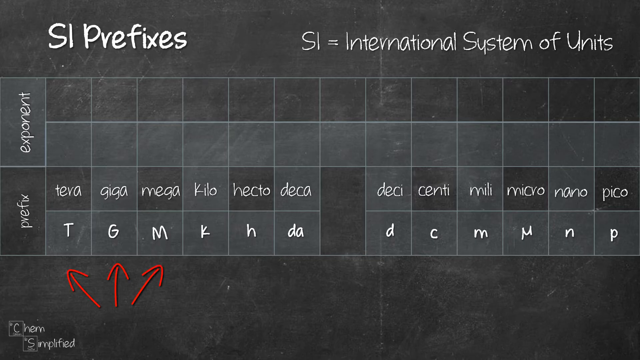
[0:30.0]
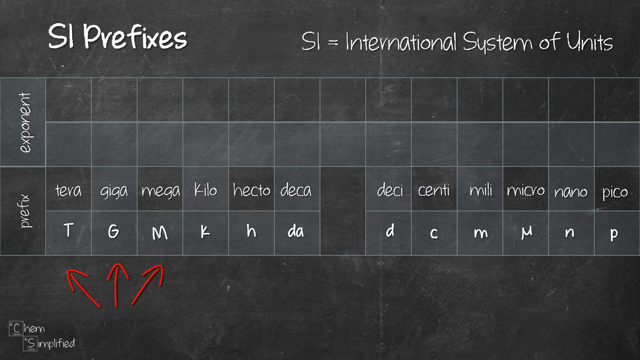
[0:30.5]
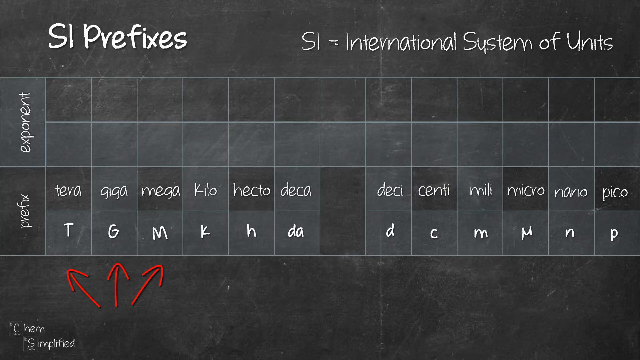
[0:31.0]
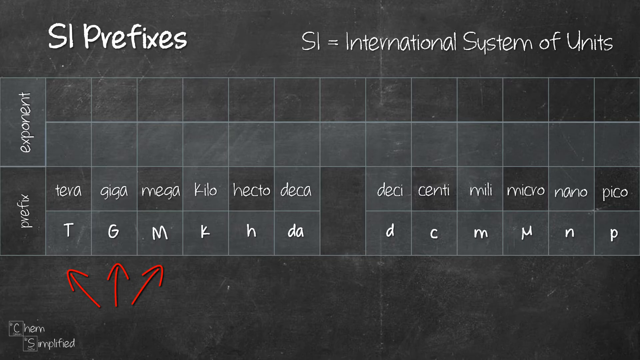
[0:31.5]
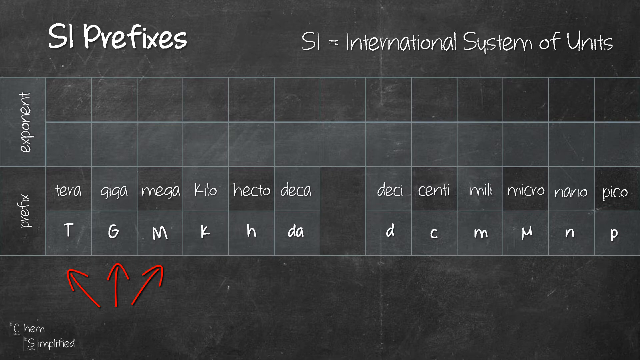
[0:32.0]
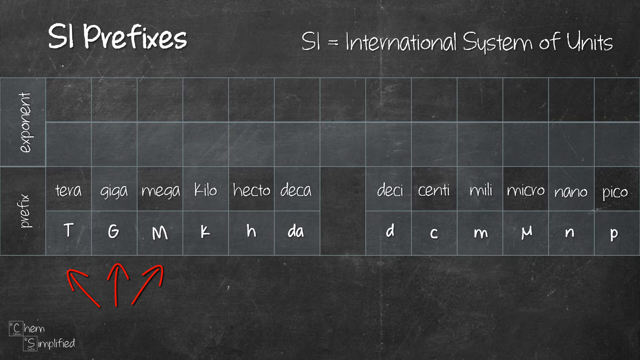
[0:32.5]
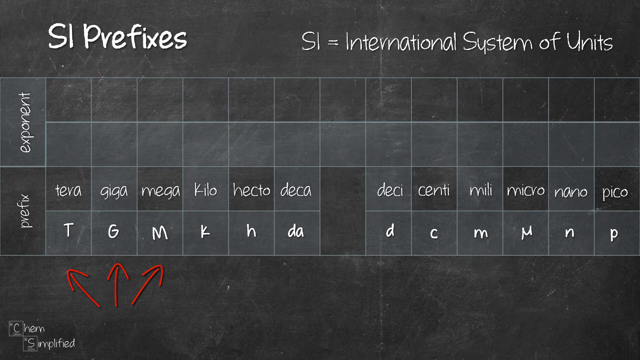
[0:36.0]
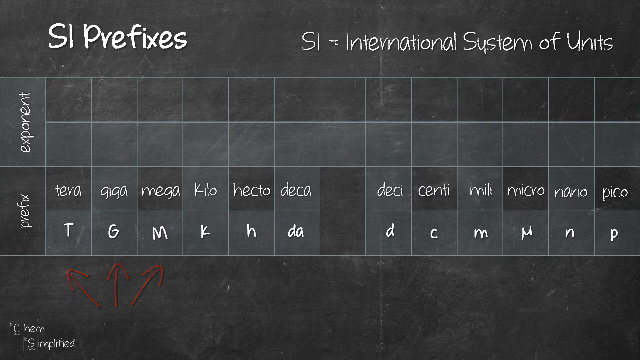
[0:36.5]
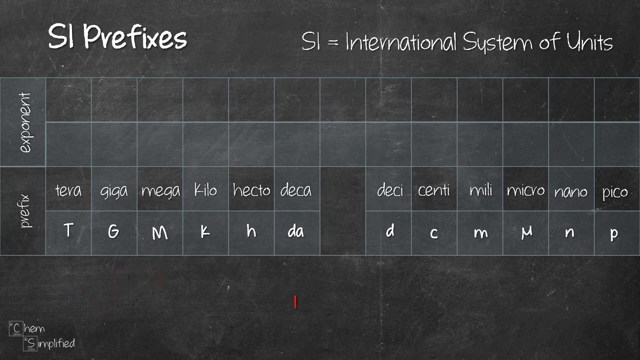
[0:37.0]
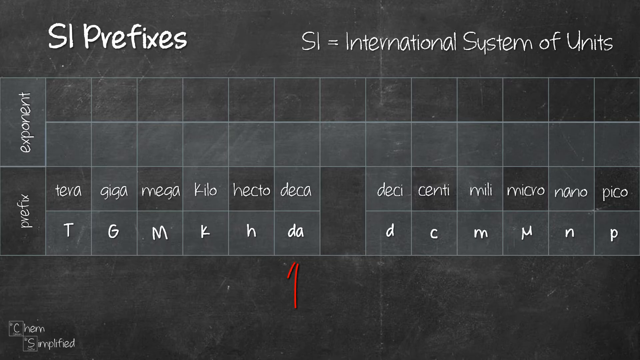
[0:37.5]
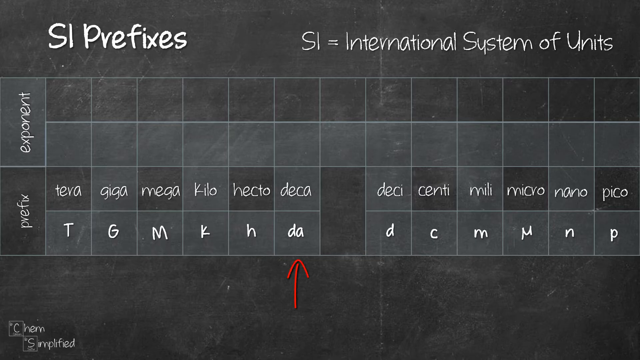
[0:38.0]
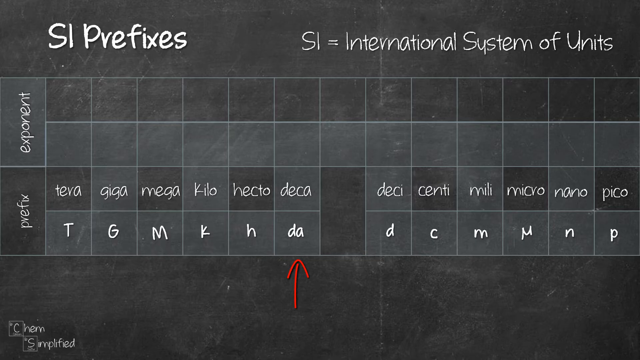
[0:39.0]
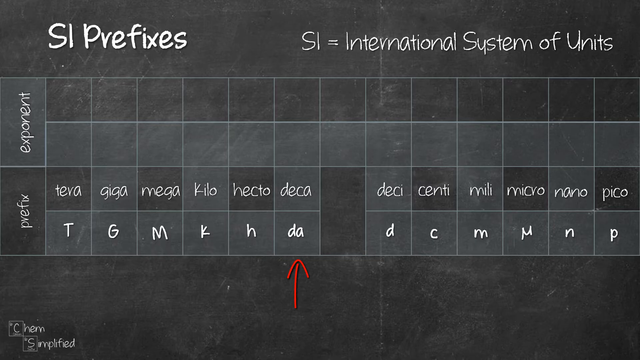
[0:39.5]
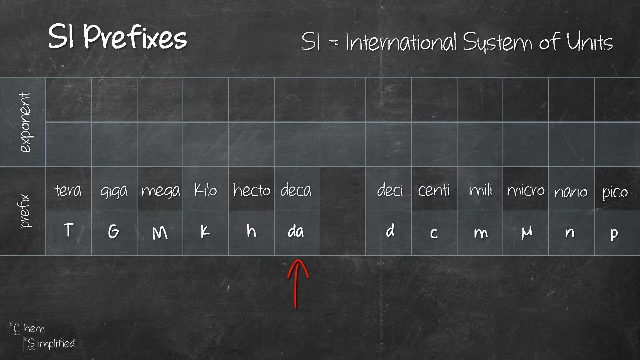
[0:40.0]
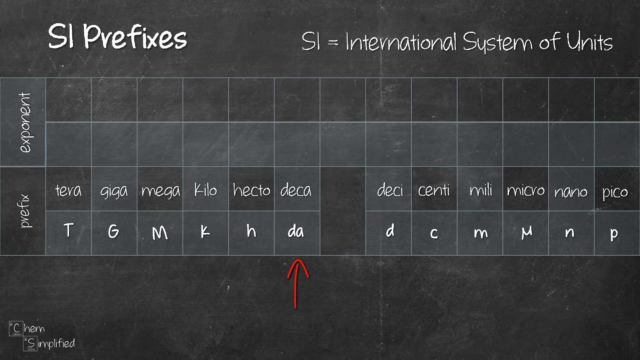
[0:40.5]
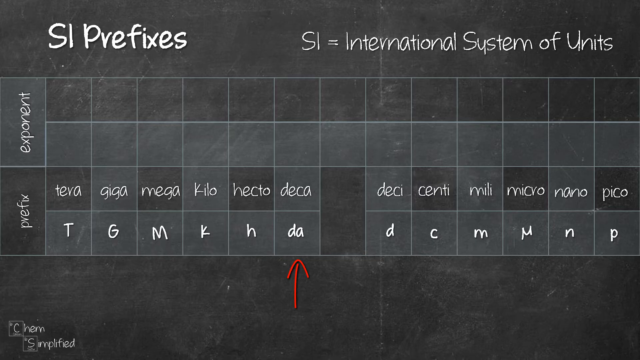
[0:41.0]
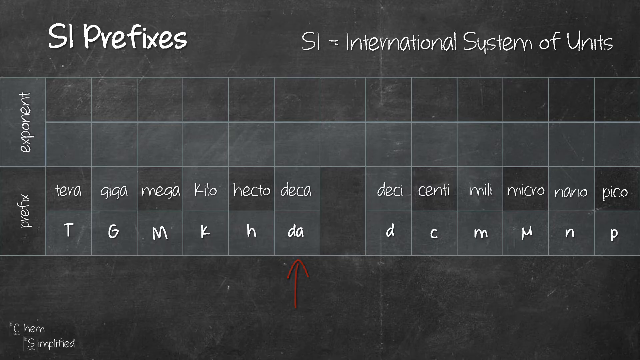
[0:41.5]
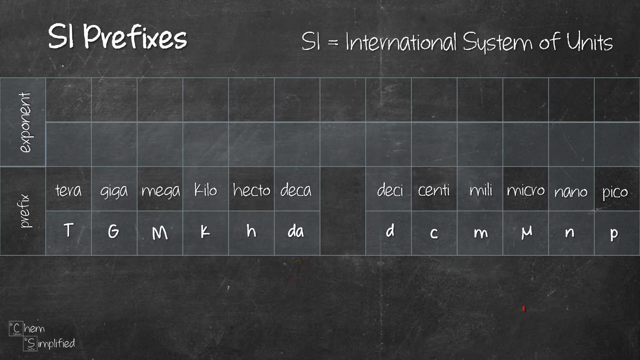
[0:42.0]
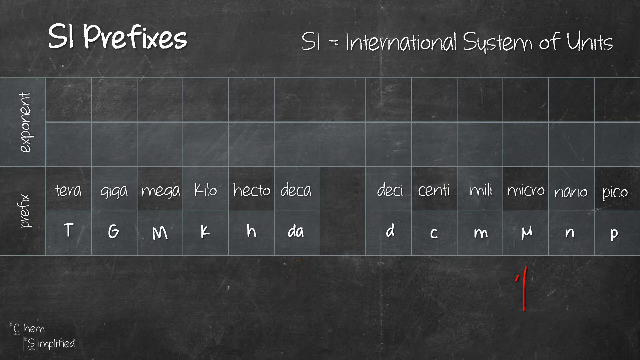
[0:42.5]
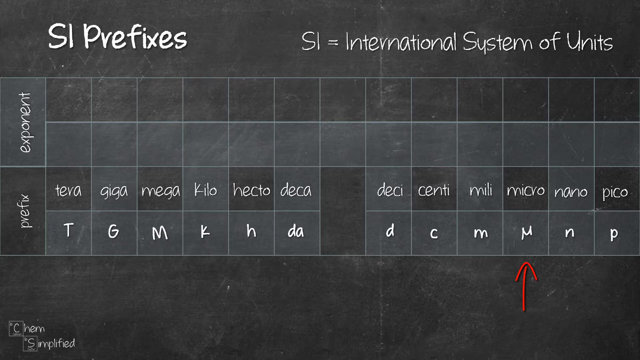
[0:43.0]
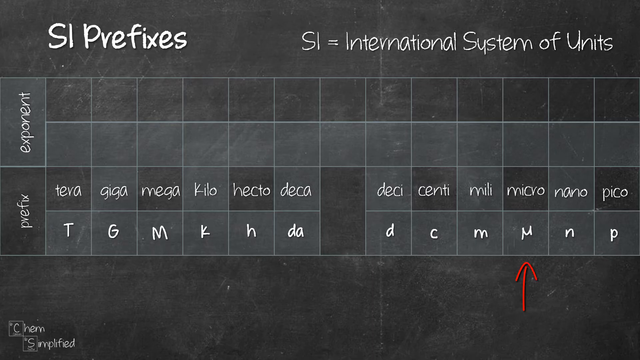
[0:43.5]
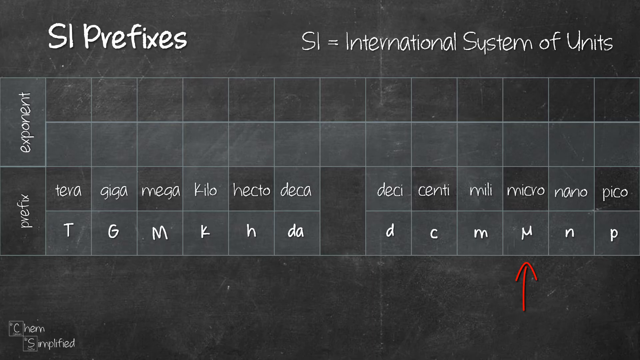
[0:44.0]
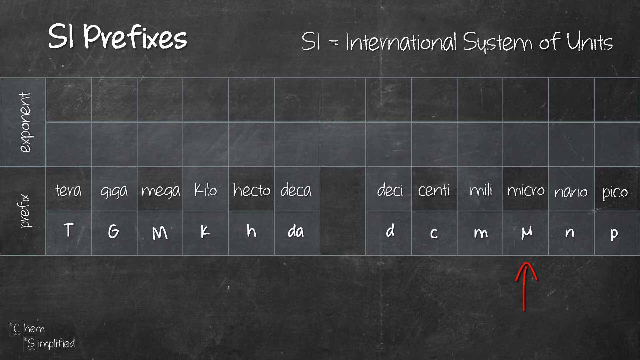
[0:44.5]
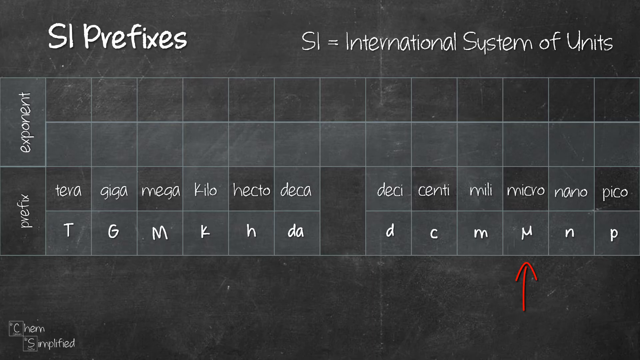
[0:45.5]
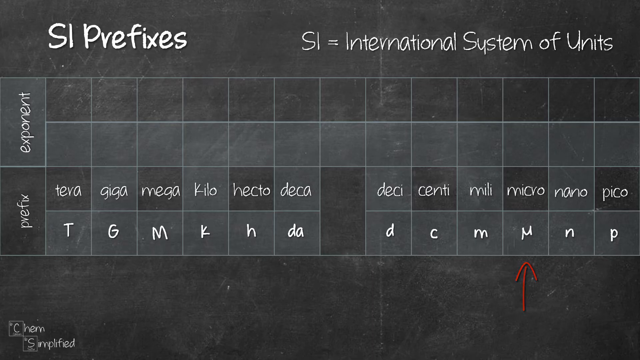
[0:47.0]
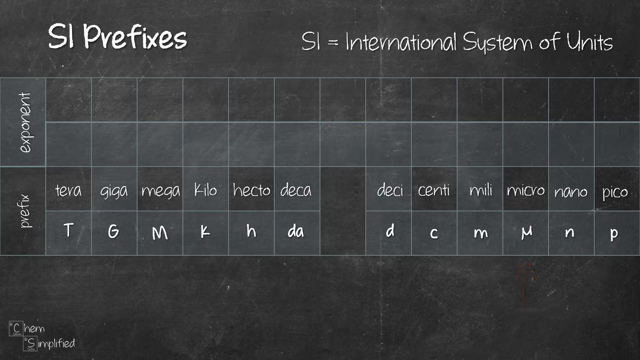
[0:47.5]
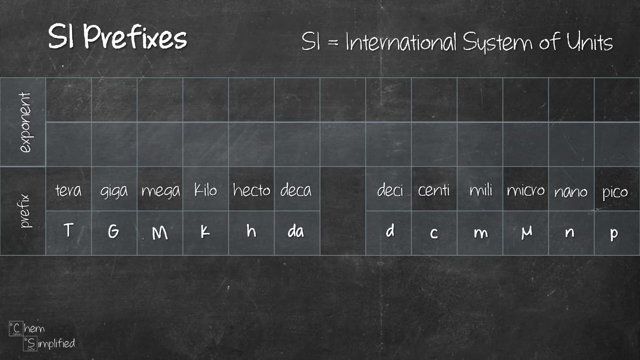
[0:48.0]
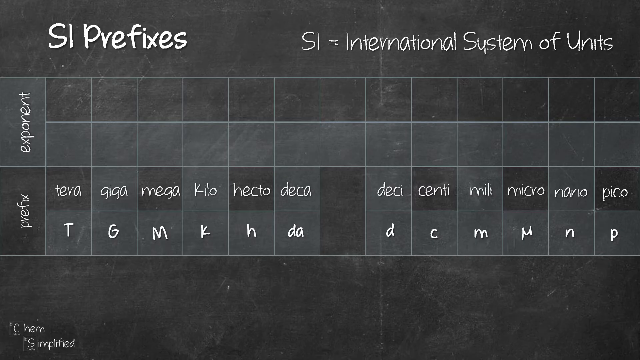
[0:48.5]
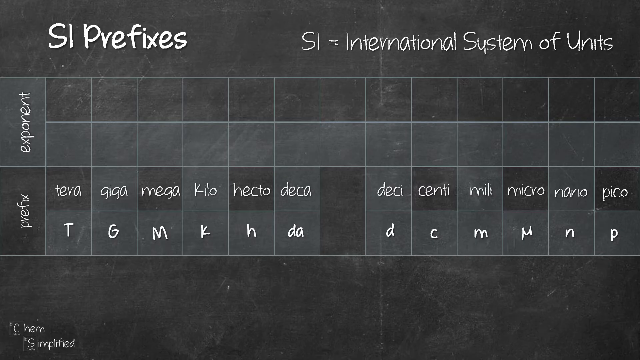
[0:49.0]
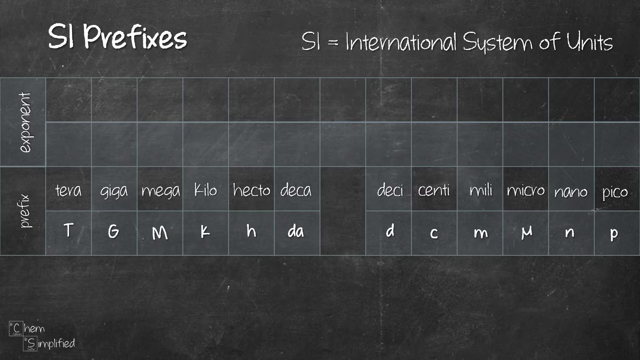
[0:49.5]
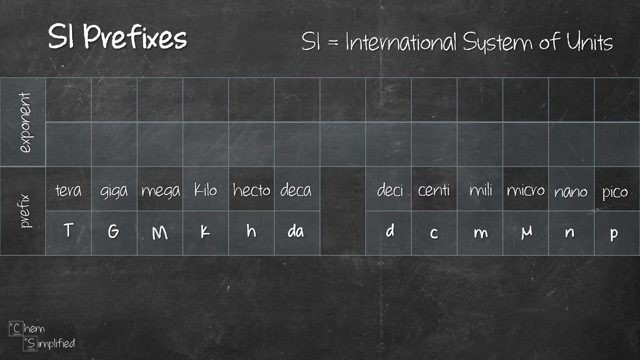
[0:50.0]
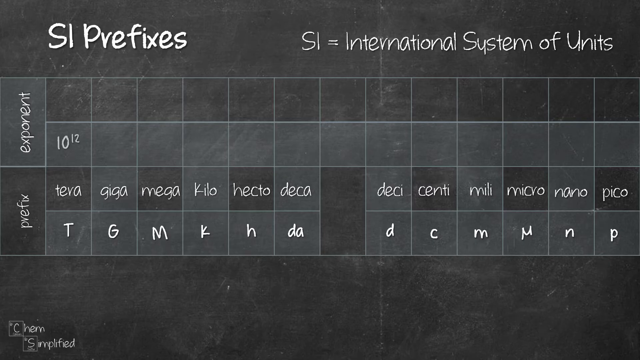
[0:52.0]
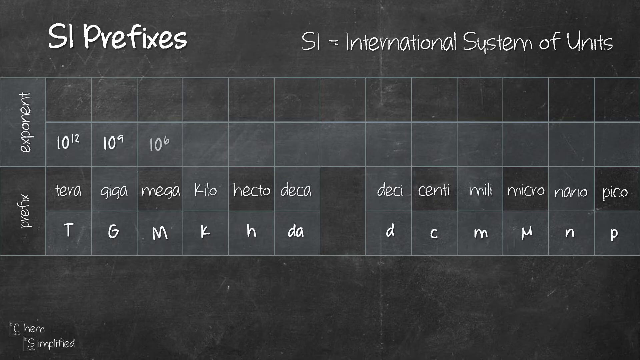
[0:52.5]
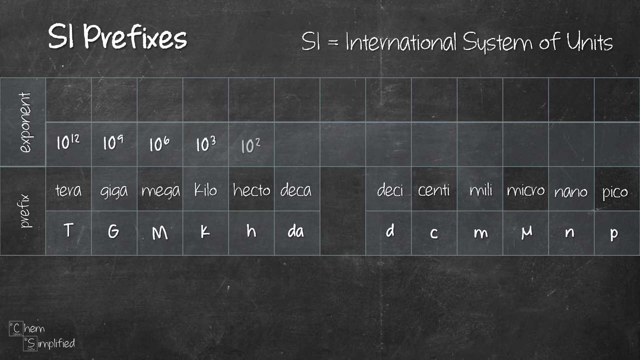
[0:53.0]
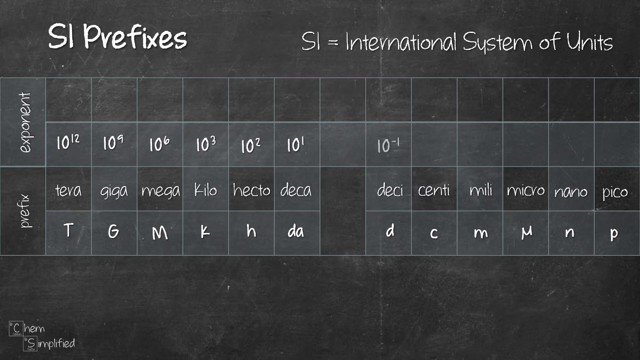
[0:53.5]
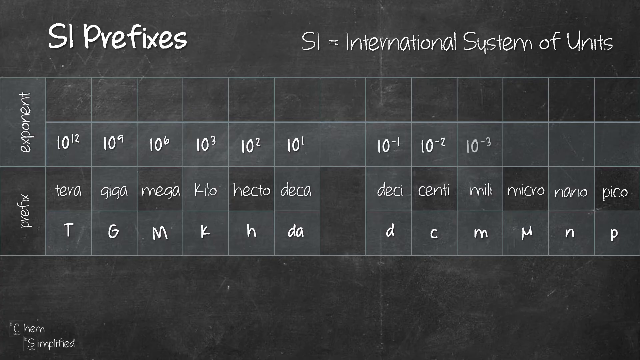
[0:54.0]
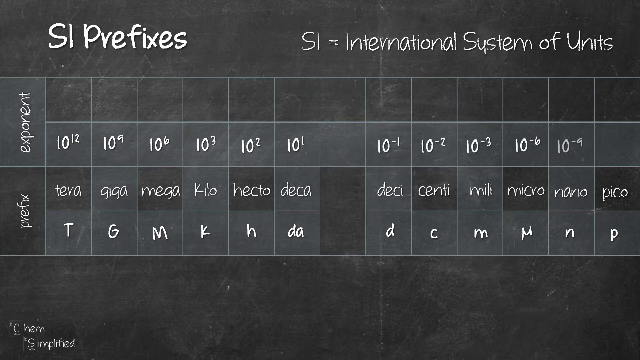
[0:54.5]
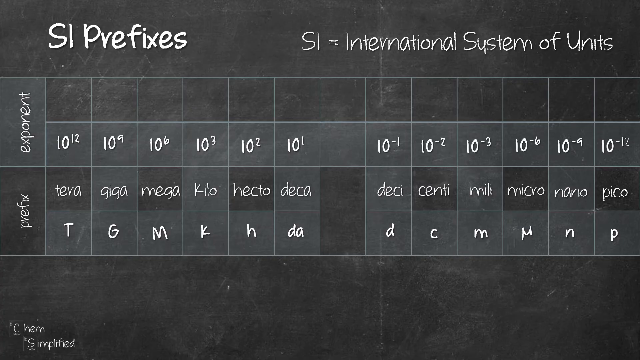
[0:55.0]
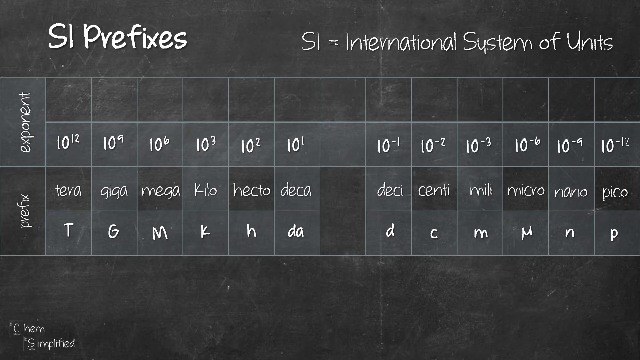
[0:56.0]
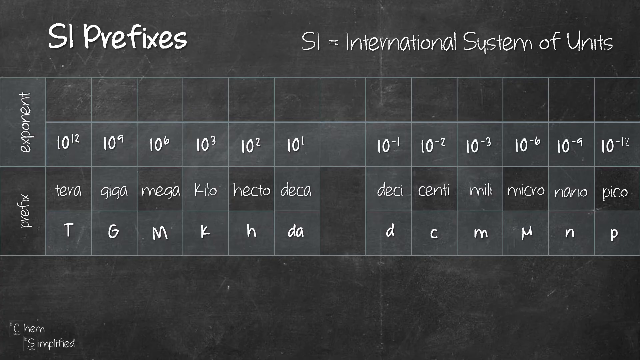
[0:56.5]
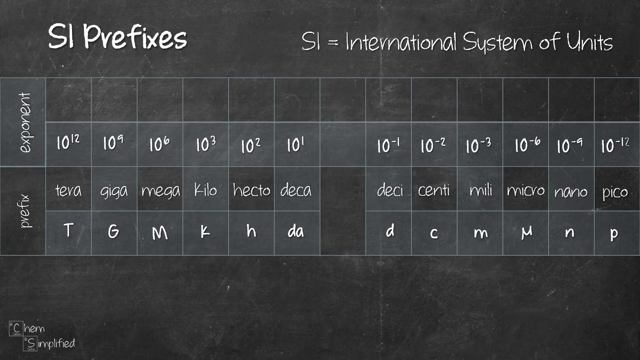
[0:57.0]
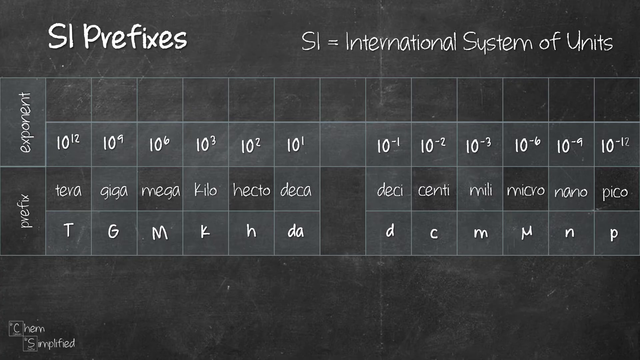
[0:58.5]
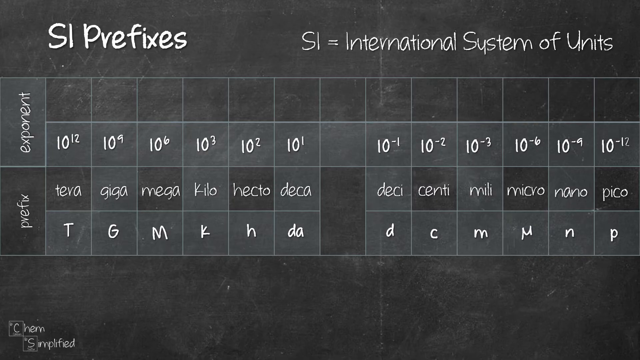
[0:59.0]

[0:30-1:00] The background is a slightly dirty chalkboard with eraser marks and writing visible on it. It does not appear to be a real chalkboard but an image of one. Text over it covers SI prefixes, with SI meaning the International System of Units. Below is a grid: the top row says "exponent", and connected right below it is "prefixes". The prefixes run across as tera (capital T), giga (capital G), mega (capital M), kilo (lowercase k), hecto (lowercase h) and deca (lowercase da). Then there is a space in the grid, followed by deci (lowercase d), centi (lowercase c), milli (lowercase m), micro (a symbol kind of like a Greek U or Greek M), nano (lowercase n) and pico (lowercase p). Three drawn arrows appear below the T, G and M, pointing up to them on the bottom left-hand side of the screen. Next an arrow pointing to the da appears, and then an arrow appears under the micro area of the screen.